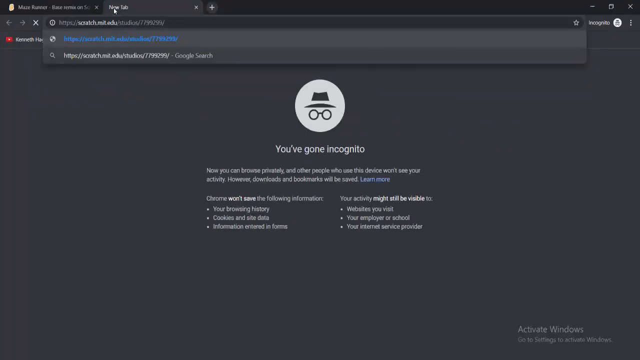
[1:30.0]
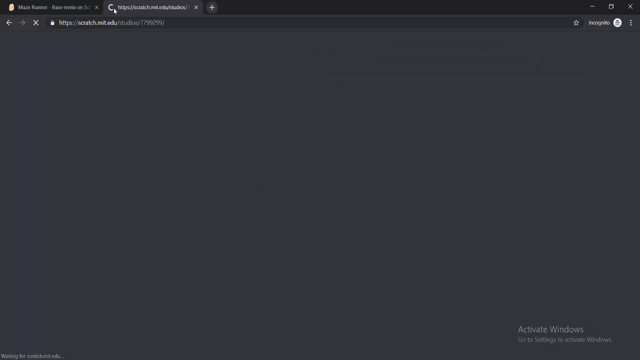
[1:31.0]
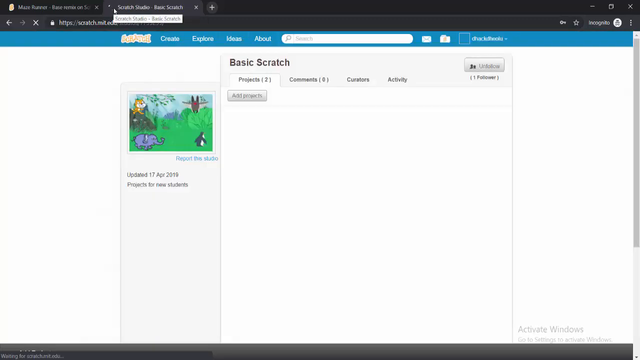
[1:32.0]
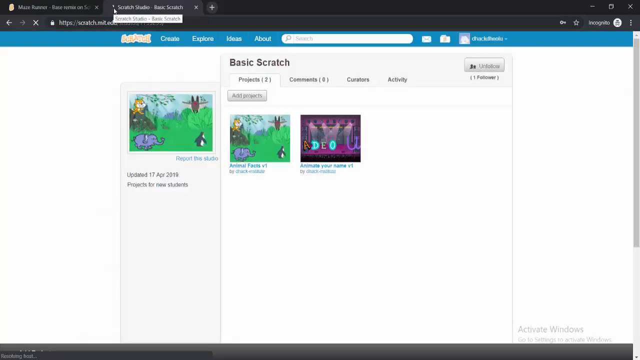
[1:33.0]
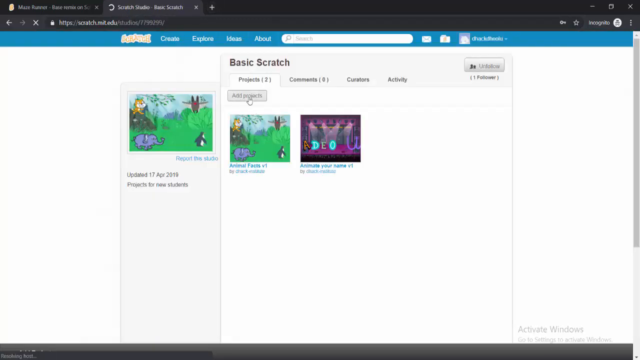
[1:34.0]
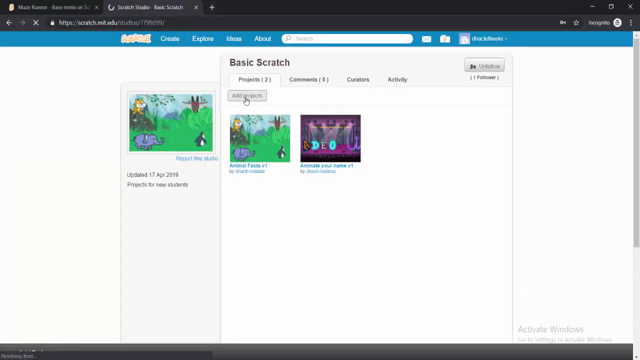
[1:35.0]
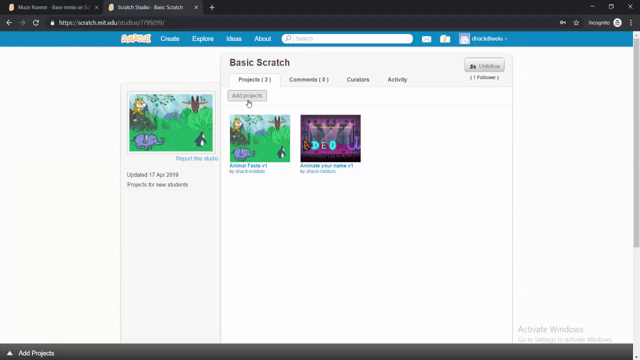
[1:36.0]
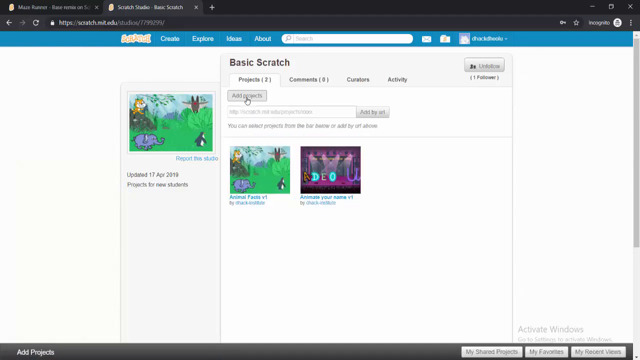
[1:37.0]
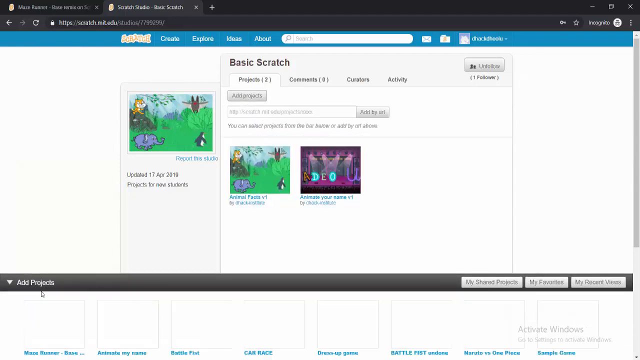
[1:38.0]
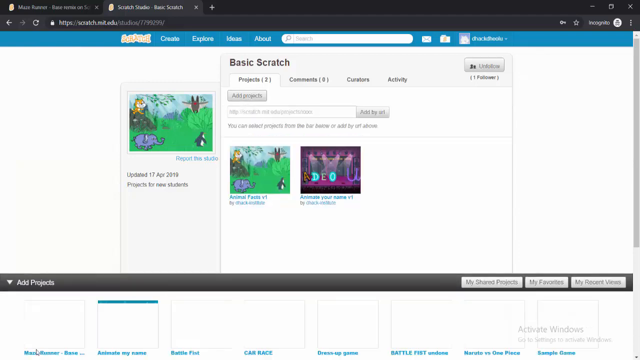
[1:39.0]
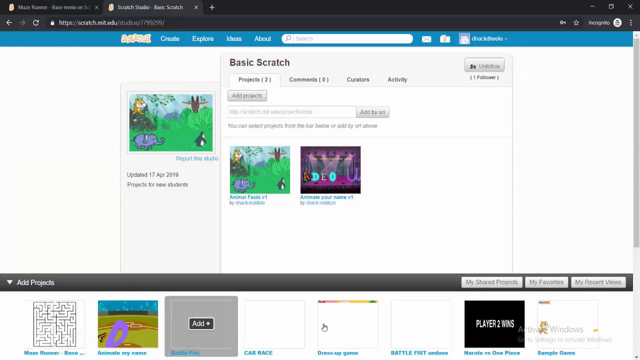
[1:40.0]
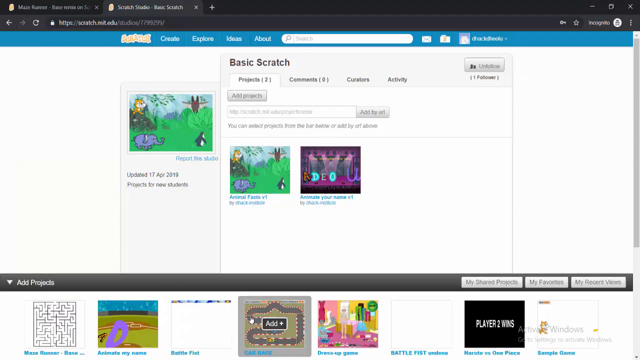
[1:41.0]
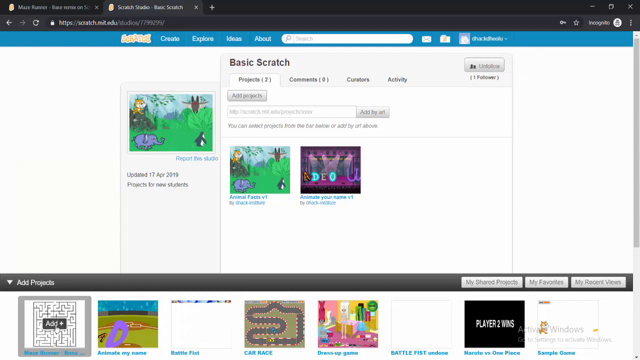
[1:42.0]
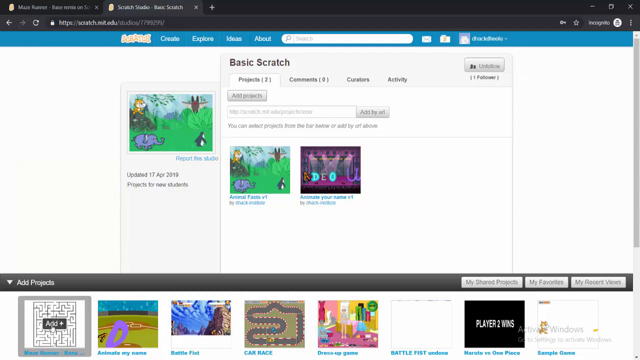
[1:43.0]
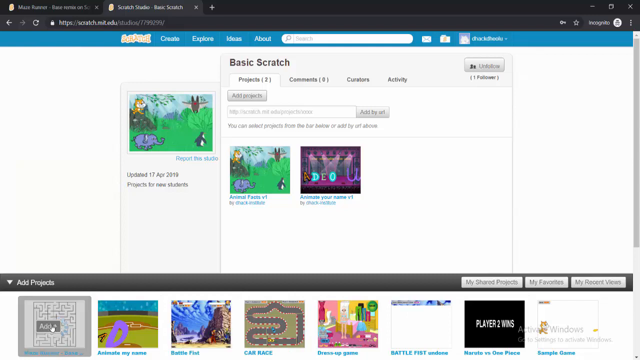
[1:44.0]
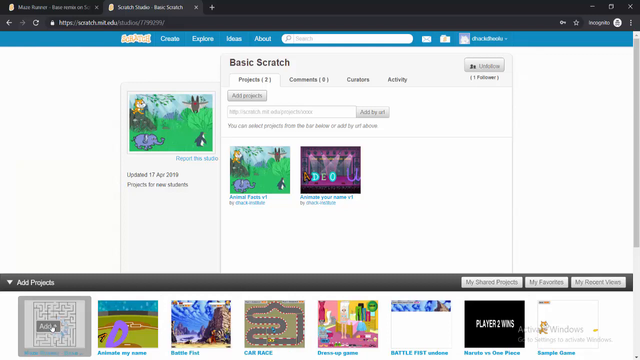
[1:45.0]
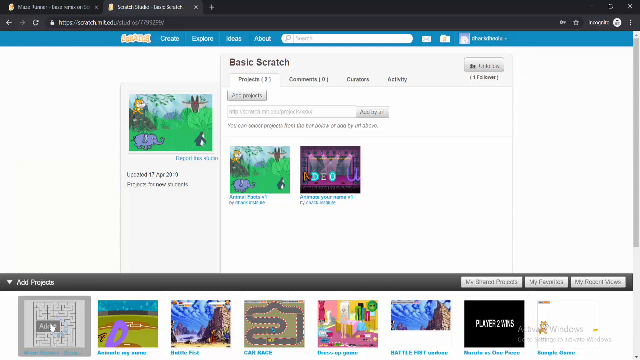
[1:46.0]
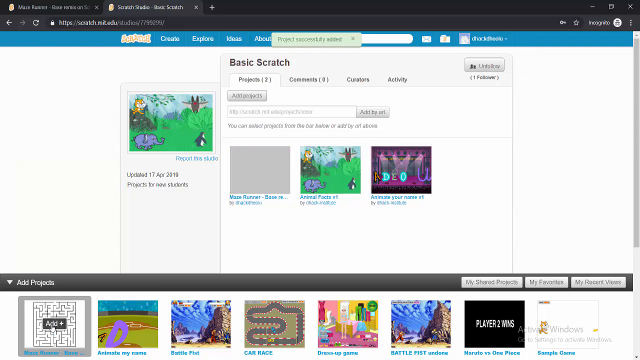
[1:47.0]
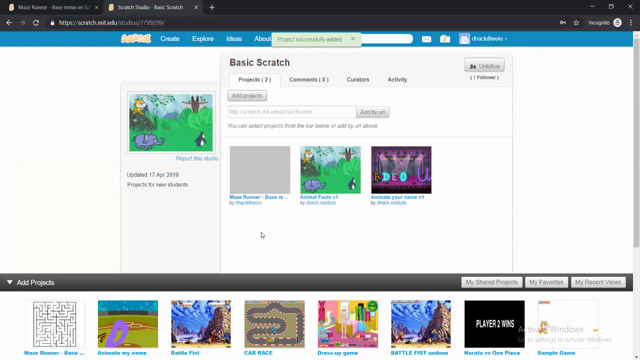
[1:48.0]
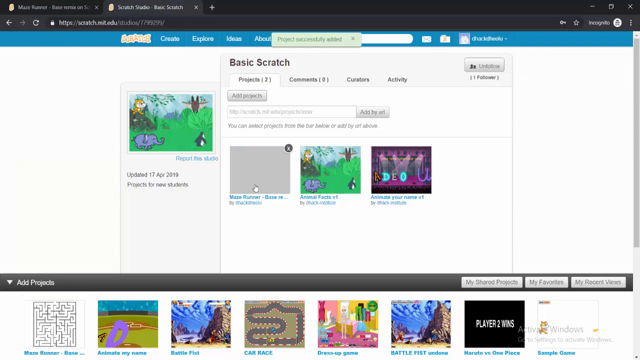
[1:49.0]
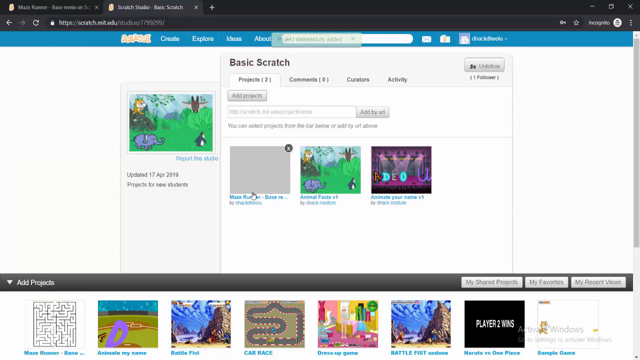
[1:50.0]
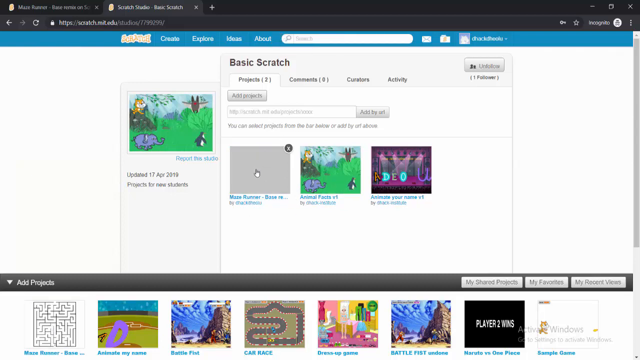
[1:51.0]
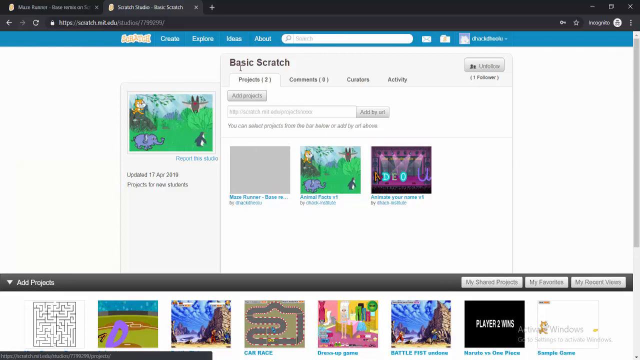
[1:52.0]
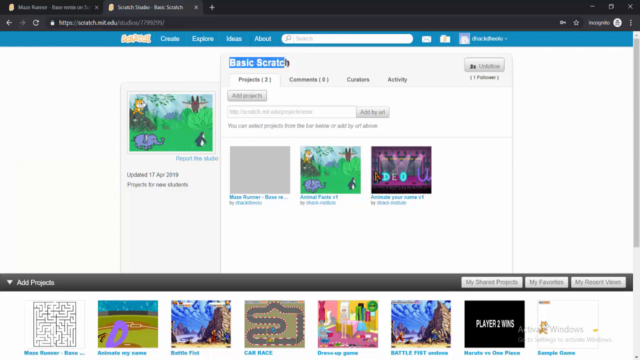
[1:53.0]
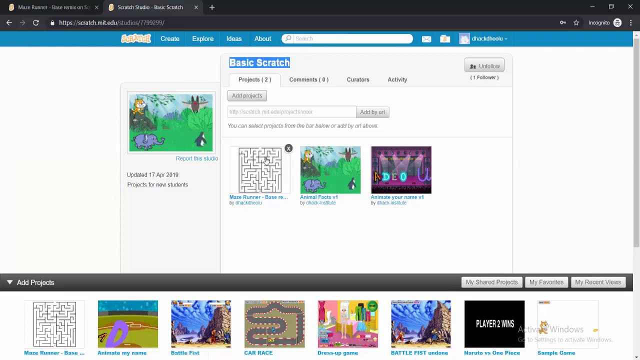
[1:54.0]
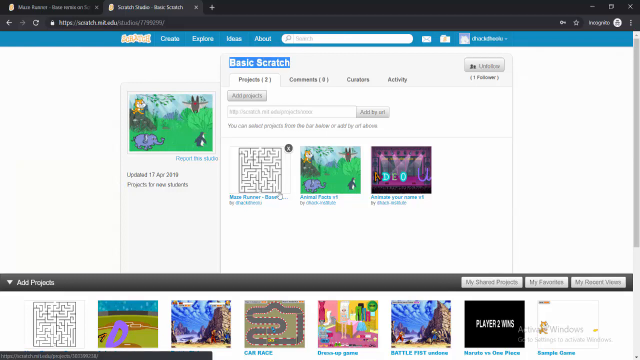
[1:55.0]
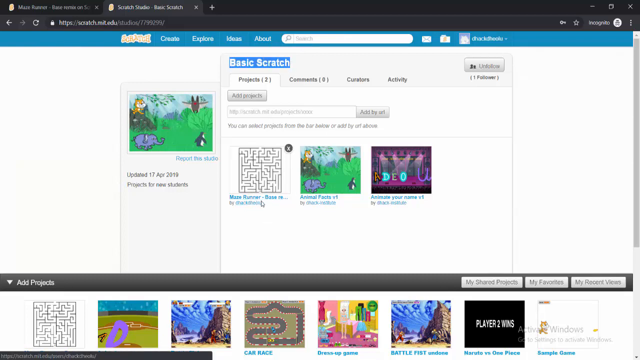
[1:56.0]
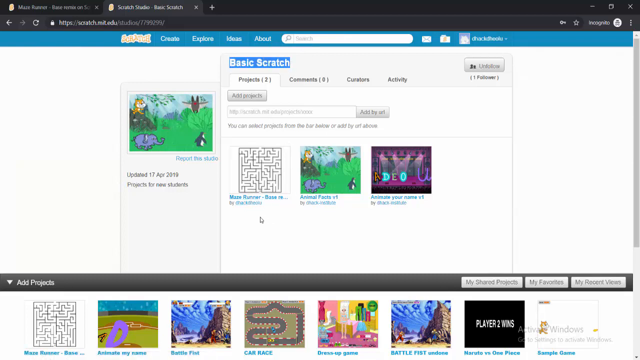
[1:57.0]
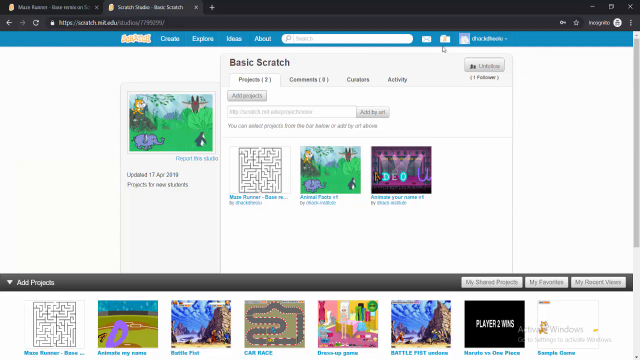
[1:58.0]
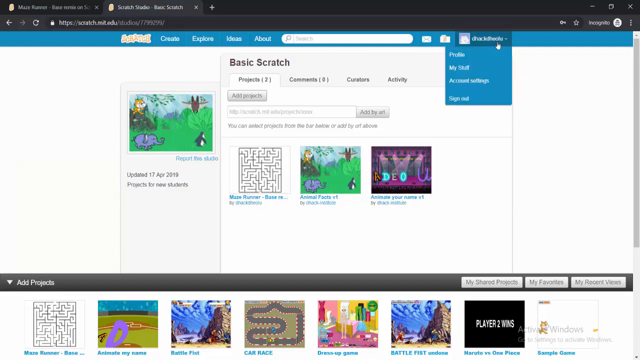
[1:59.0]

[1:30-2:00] The user enters the URL of a scratch.mit.edu page. It finishes loading and takes him to a basic Scratch page showing a list of projects. Two projects show up, AnimalFaxV3 and animate your name, each with an image: one of a jungle and one of a concert stage. To the left is the featured studio project, which is the one of the animals in a jungle. He clicks the Add Projects button, slightly above it, and a menu appears at the bottom allowing him to select from several of his draft projects. He selects the first one, a maze project he has created, and it appears to the left of the two other projects currently in his studio. His mouse then moves to the top right of the screen, hovers over his profile header button, and he selects My Stuff.